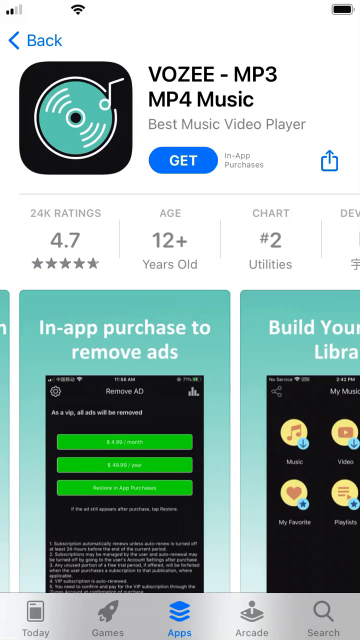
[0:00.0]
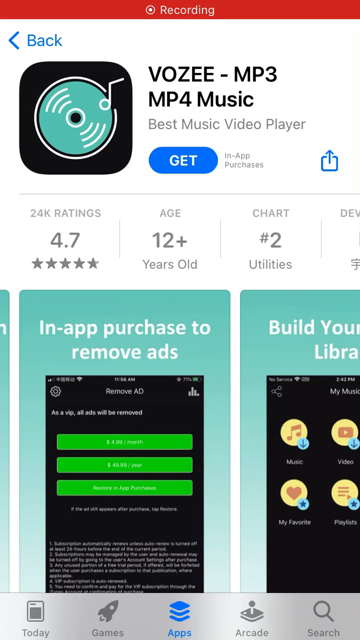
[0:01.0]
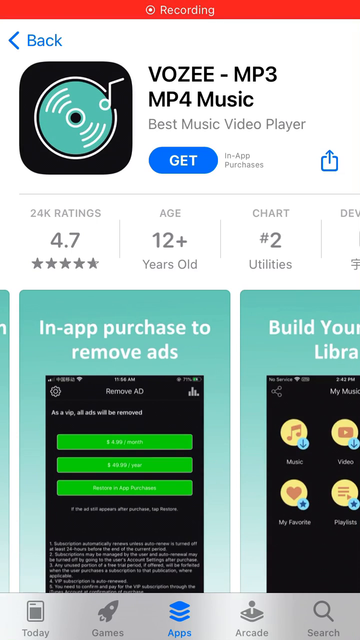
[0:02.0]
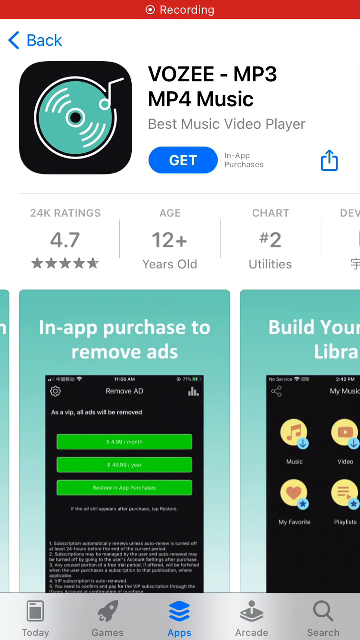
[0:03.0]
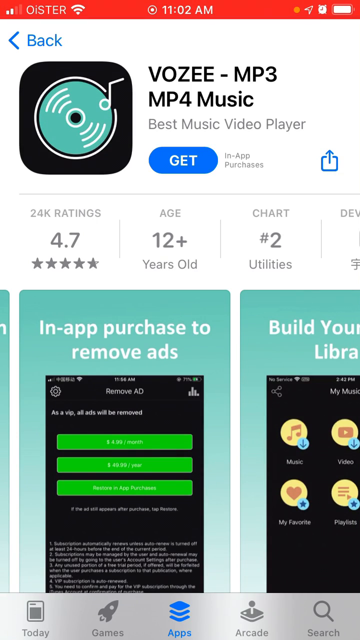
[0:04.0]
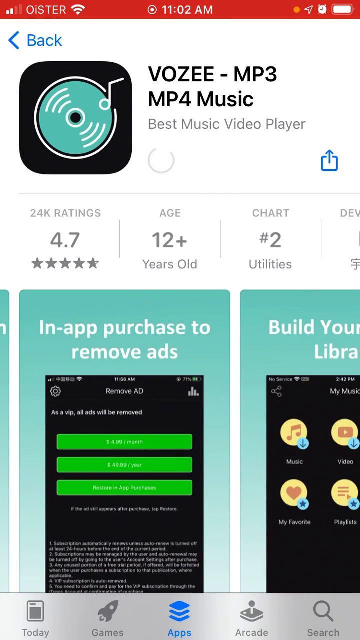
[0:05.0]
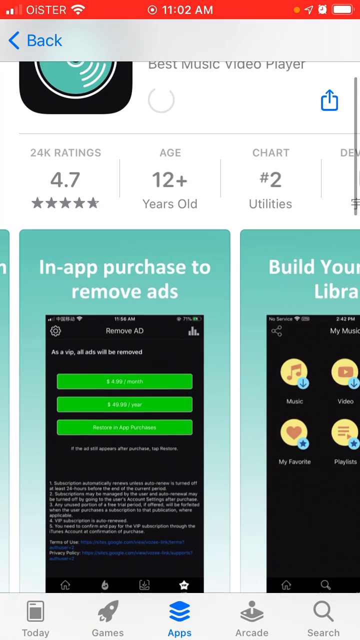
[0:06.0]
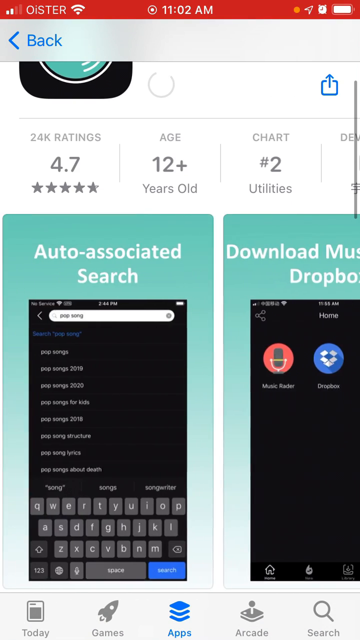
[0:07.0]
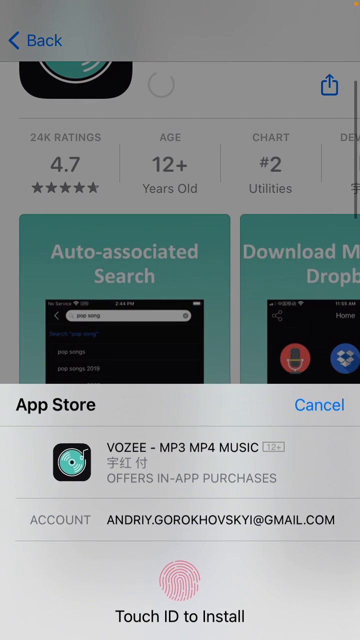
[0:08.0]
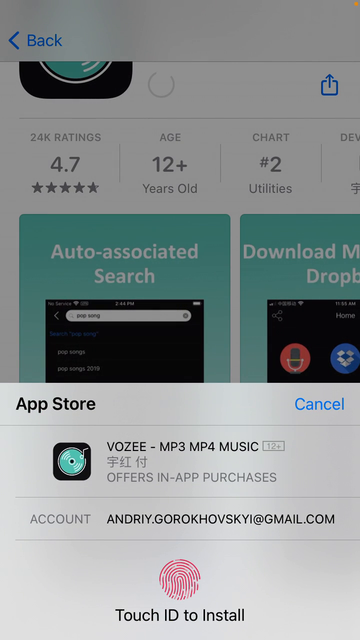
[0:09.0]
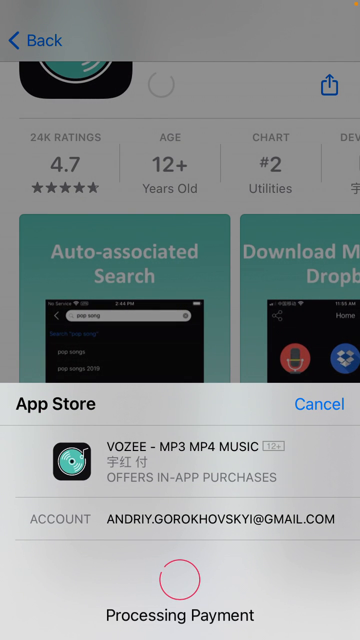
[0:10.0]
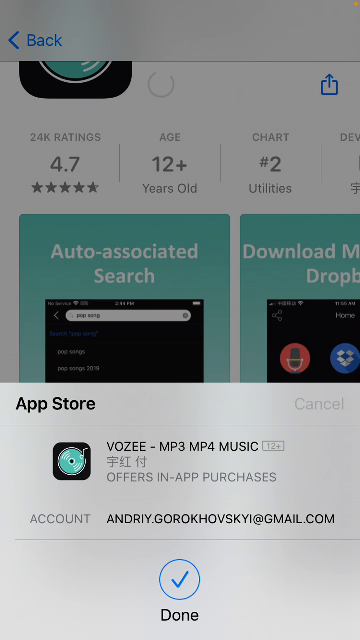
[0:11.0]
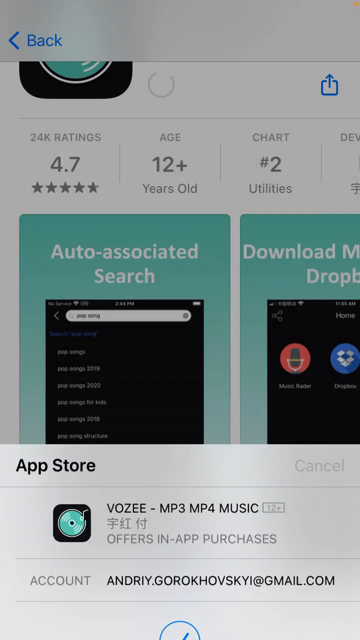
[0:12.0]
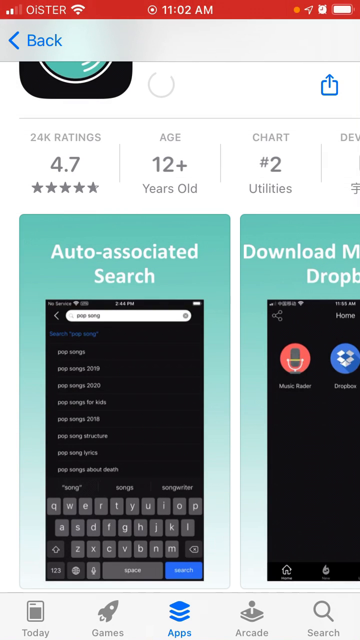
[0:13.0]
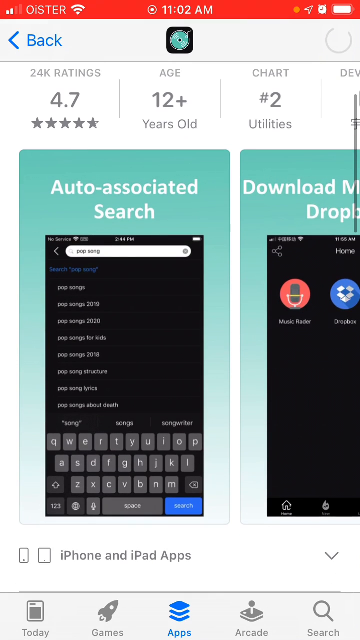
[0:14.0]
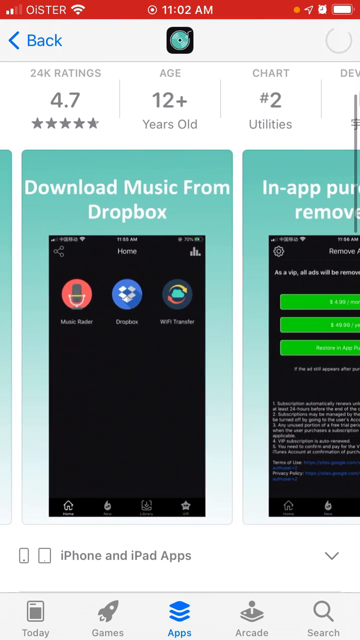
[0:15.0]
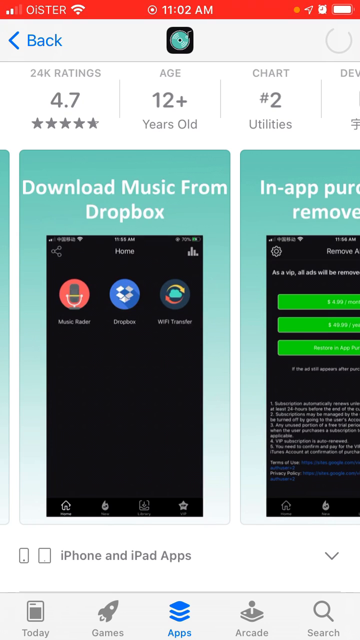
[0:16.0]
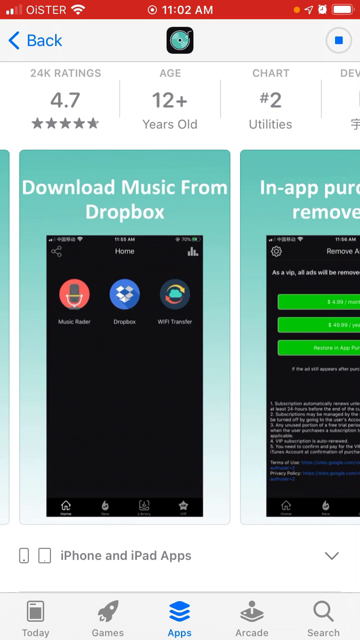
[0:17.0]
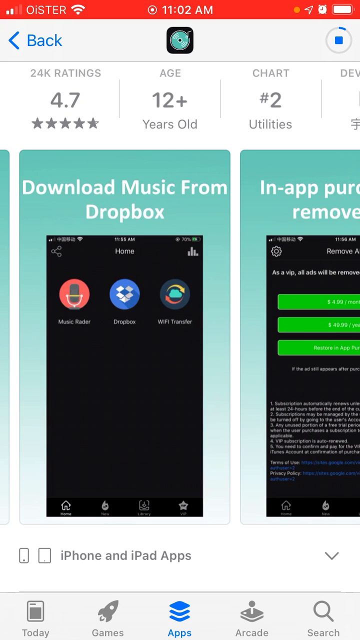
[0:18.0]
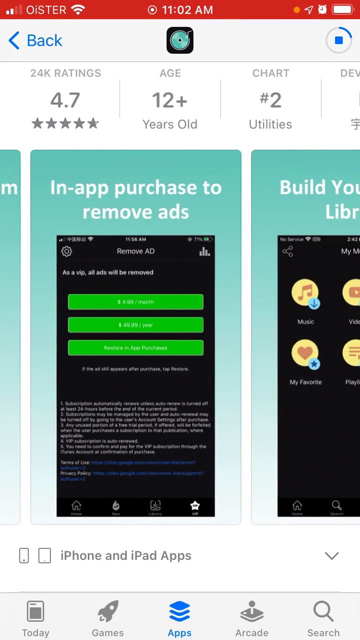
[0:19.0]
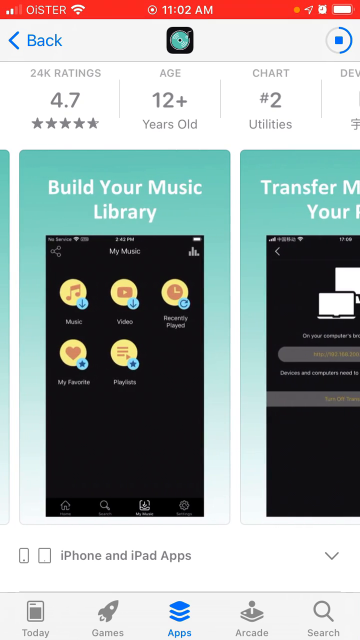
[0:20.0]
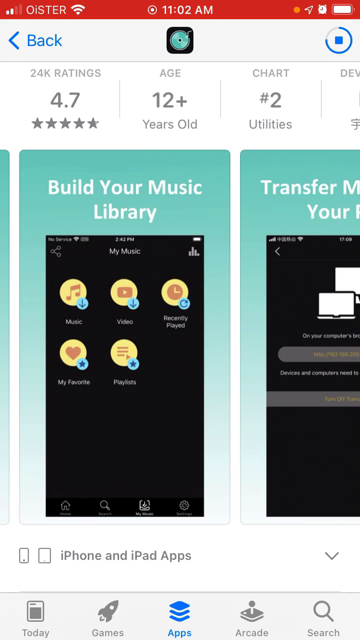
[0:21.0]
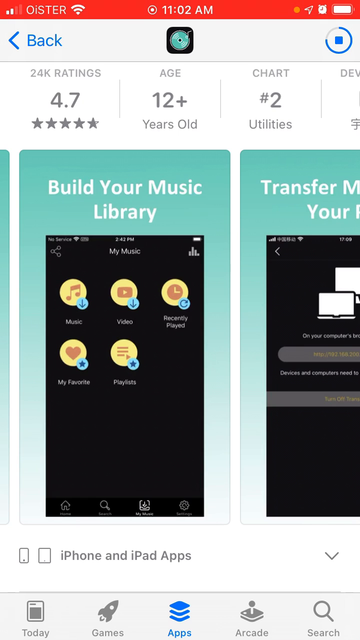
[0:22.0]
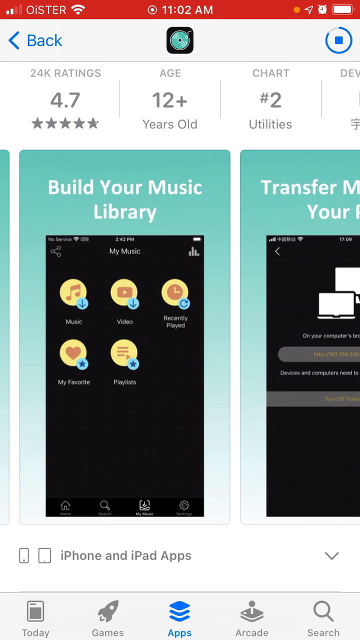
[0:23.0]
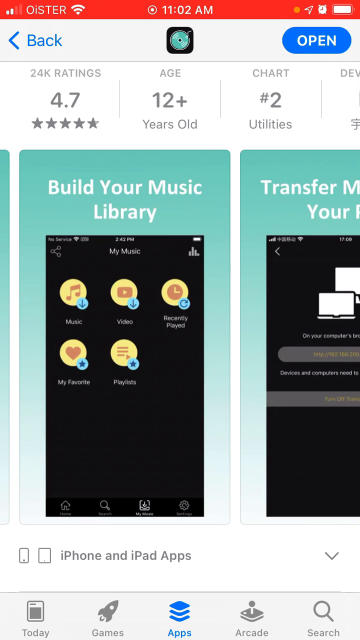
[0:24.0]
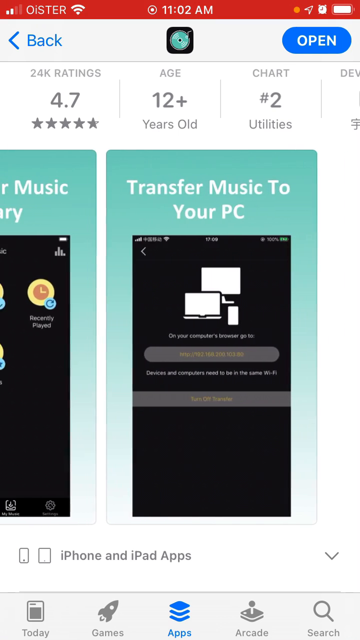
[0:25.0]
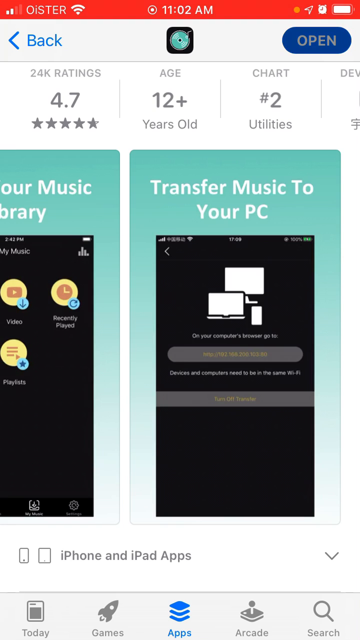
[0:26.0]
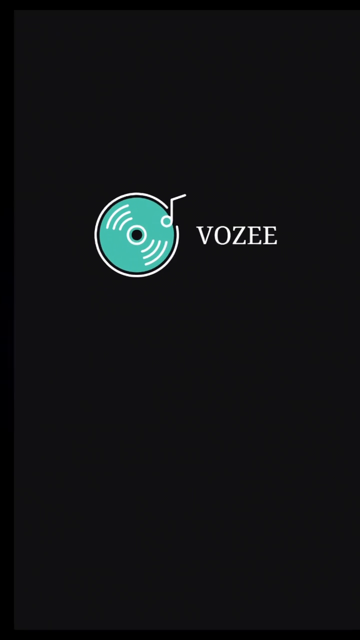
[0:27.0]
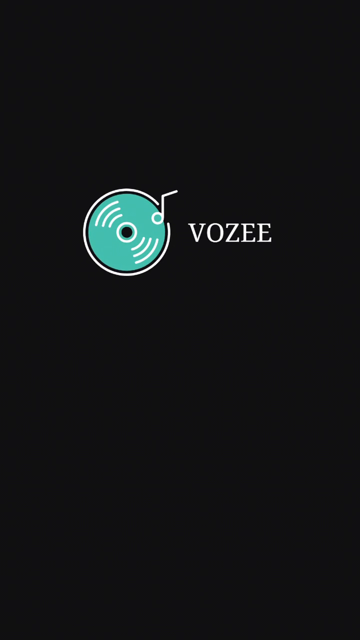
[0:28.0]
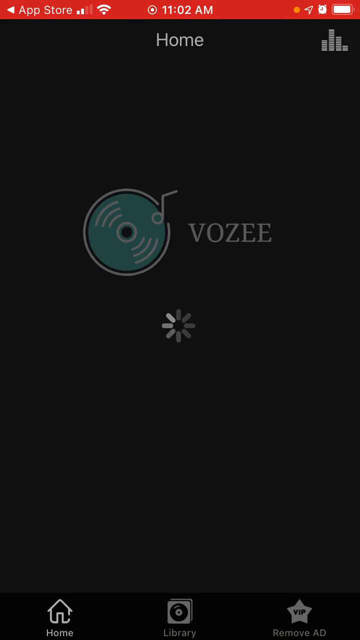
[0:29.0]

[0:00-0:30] A screen recording on an iPhone shows the App Store page for an app called Vozee, mp3, mp4 music. The page says it is the best music video player, and it has 24k ratings, 4.7 stars, an age rating of 12+, and a ranking of number 2 in utilities. It mentions an in-app purchase to remove ads and "build your library." The user presses the Get button to add the app to the phone and uses Touch ID to install it, and a small window pops up. They scroll through the rest of the page, which shows other information about the app, including "download music from Dropbox" with screenshots underneath showing what to do. The page also covers building a music library and transferring music to the phone and PC. The app then opens on a black screen with "Vozee" on it and a small CD or record emblem in teal outlined in white. Inside it is a small shape that looks like a music note but could also be the needle arm of a record player. At the very end a pop-up appears reading "Vozee would like to send you notifications. Notifications may include alerts, sounds, and icon badges. These can be configured in settings." It has a "don't allow" button and an "allow" button.